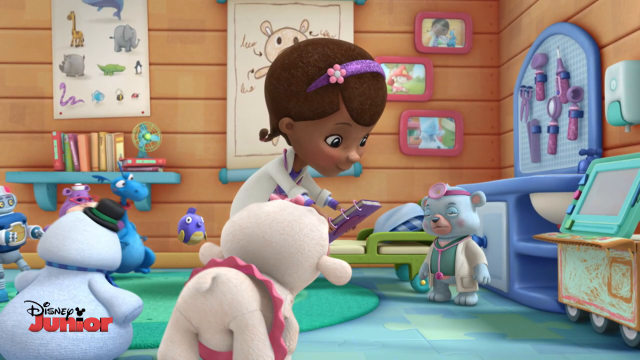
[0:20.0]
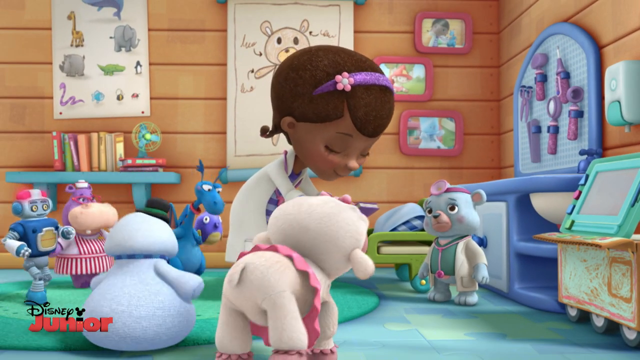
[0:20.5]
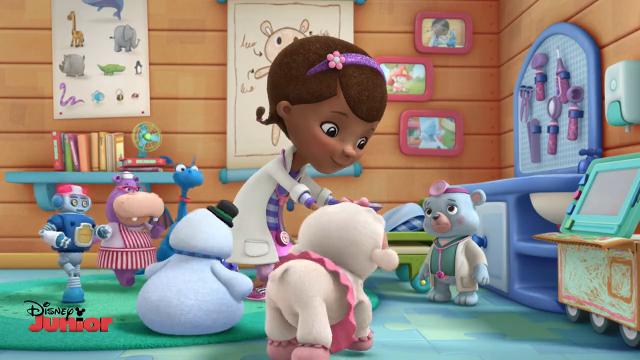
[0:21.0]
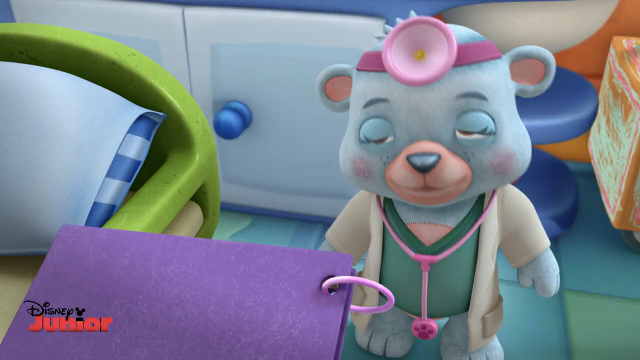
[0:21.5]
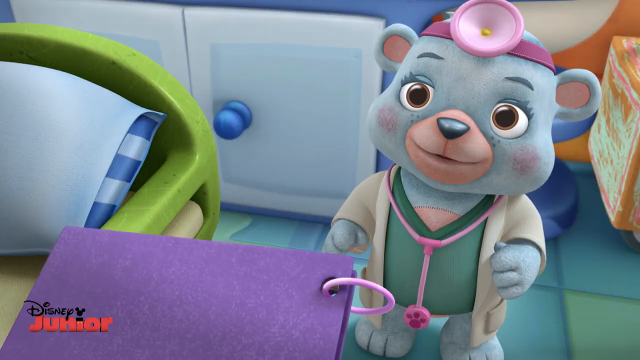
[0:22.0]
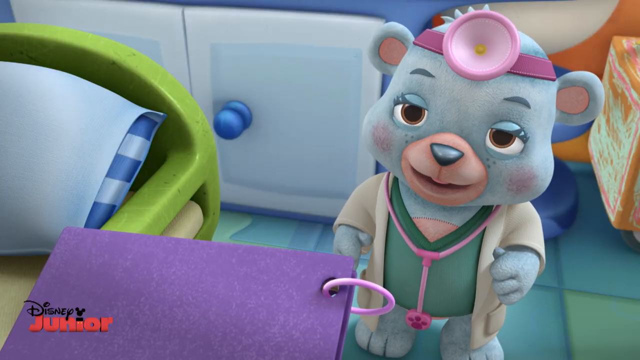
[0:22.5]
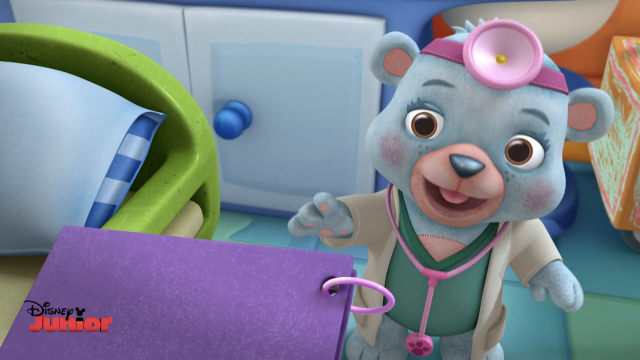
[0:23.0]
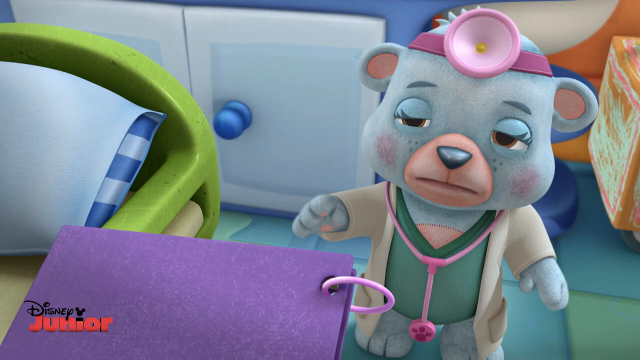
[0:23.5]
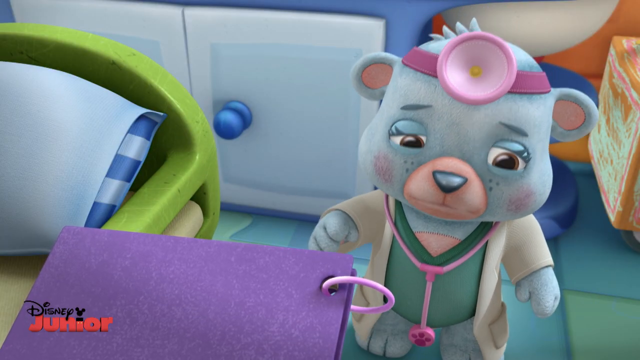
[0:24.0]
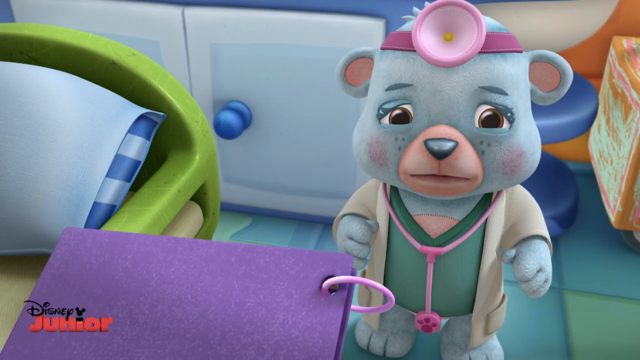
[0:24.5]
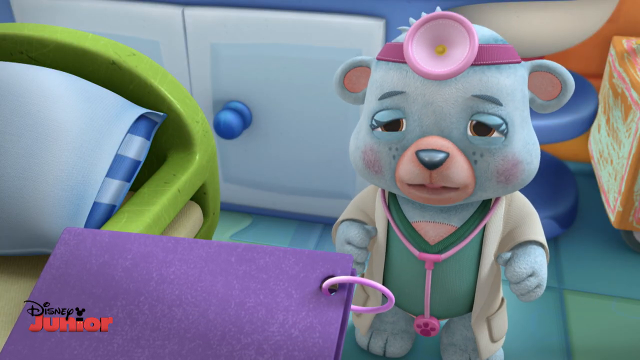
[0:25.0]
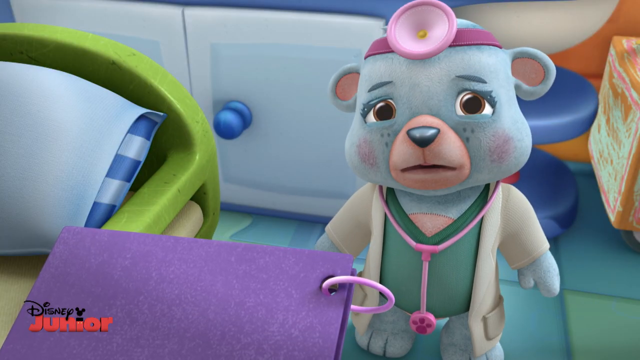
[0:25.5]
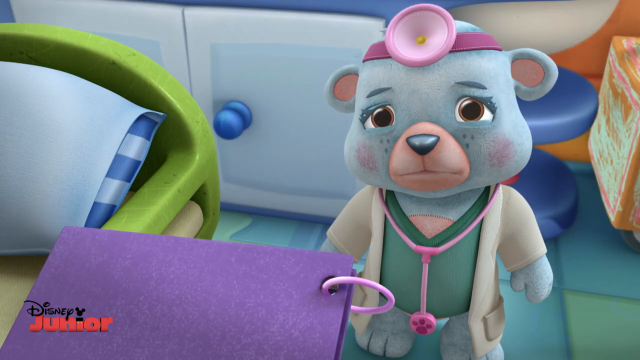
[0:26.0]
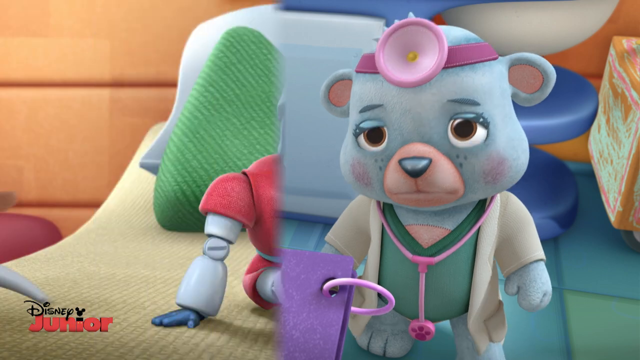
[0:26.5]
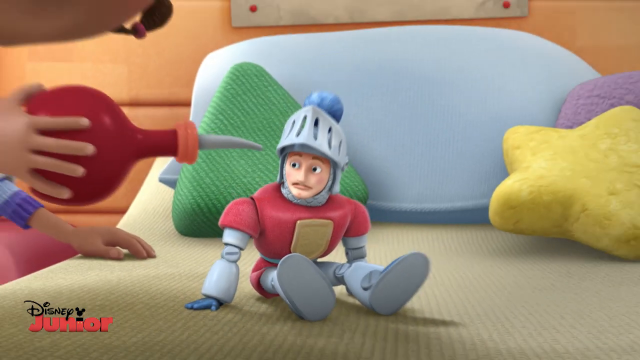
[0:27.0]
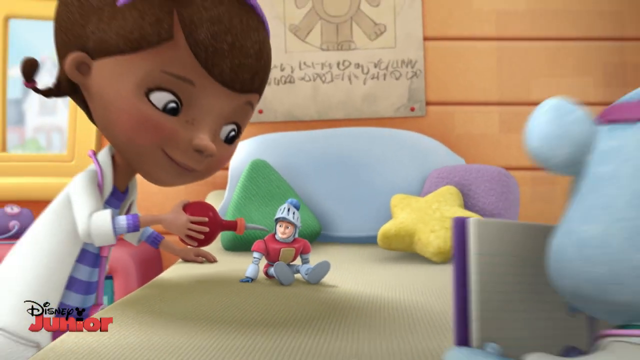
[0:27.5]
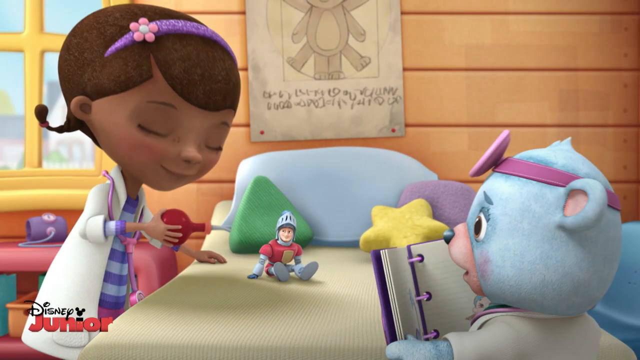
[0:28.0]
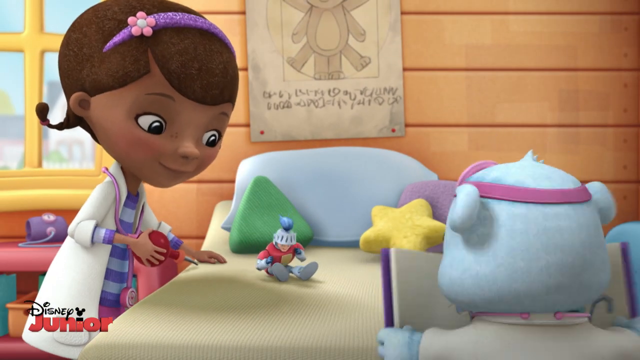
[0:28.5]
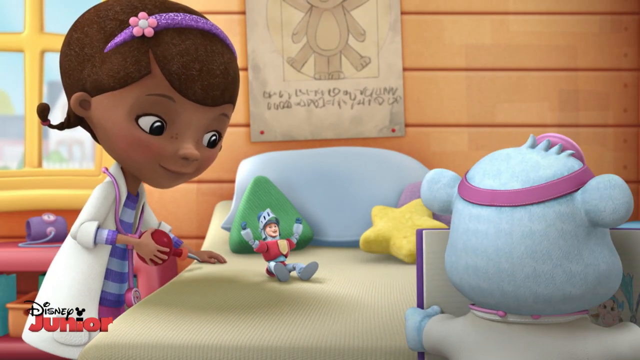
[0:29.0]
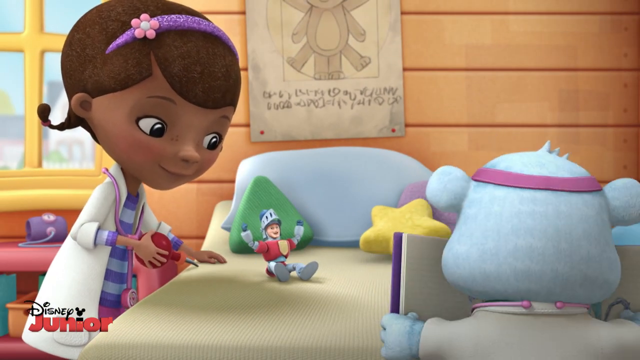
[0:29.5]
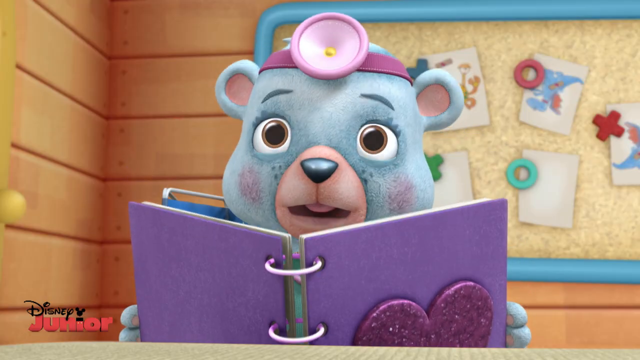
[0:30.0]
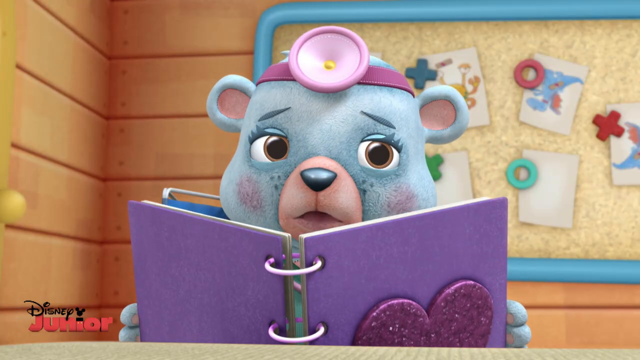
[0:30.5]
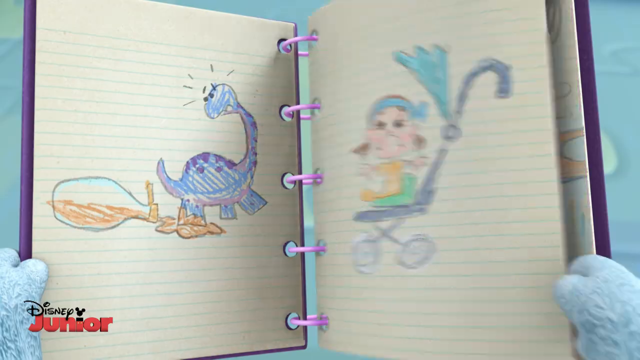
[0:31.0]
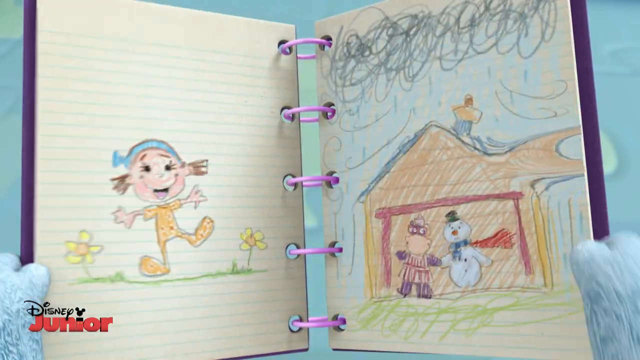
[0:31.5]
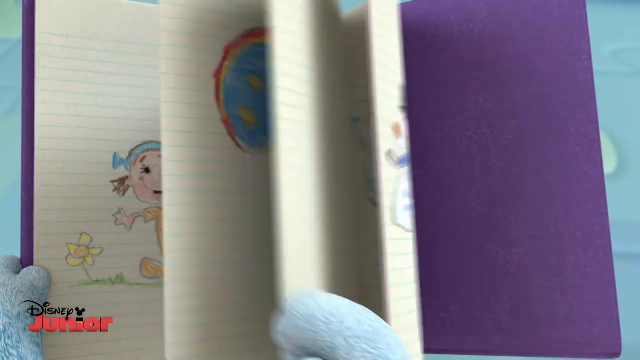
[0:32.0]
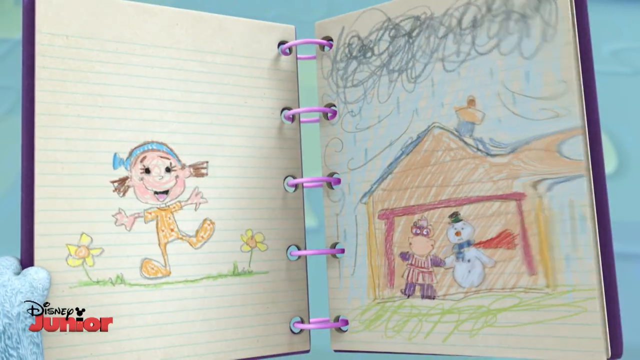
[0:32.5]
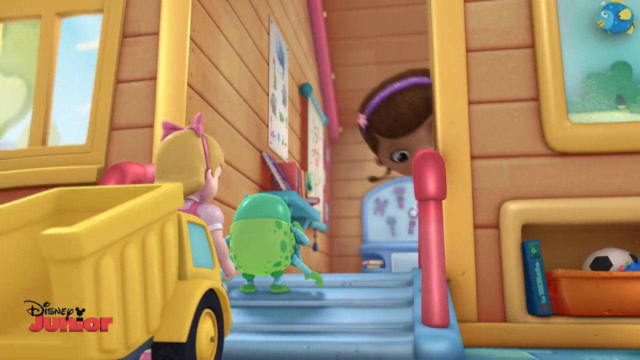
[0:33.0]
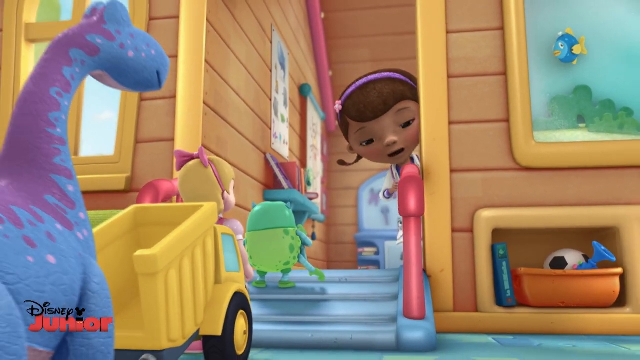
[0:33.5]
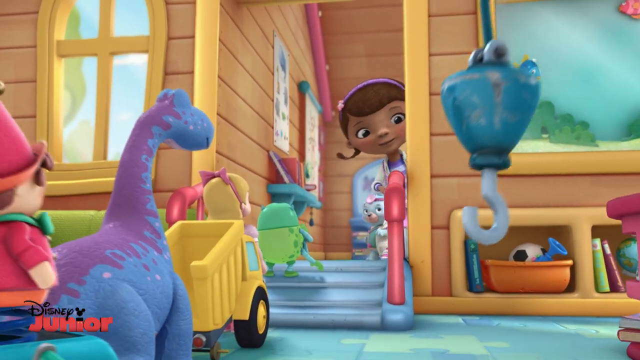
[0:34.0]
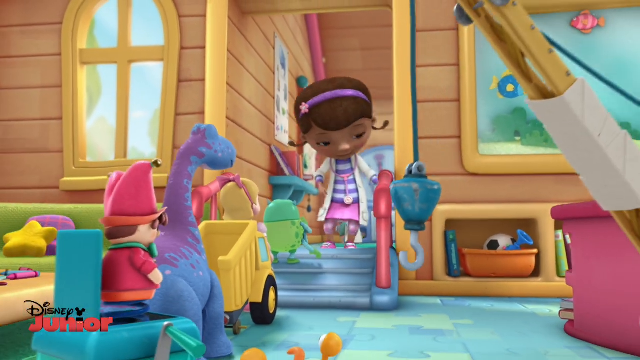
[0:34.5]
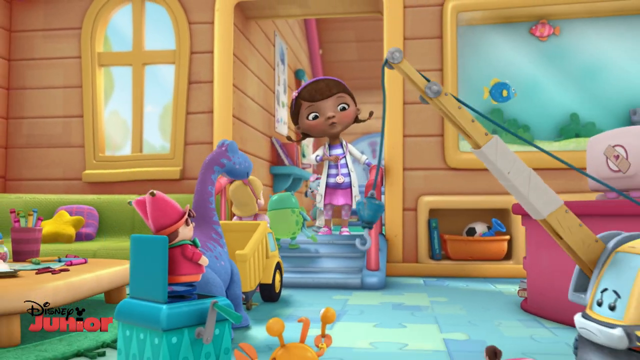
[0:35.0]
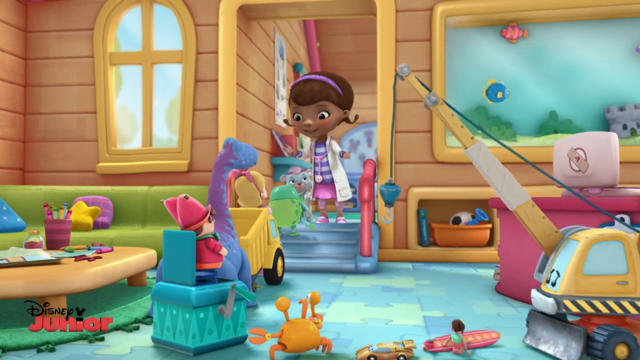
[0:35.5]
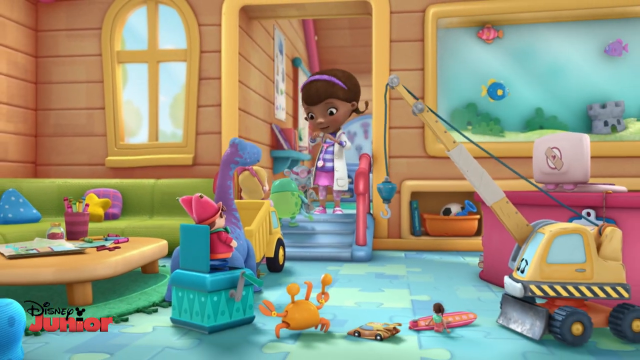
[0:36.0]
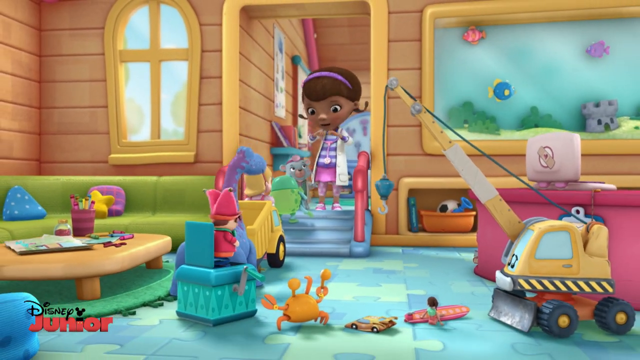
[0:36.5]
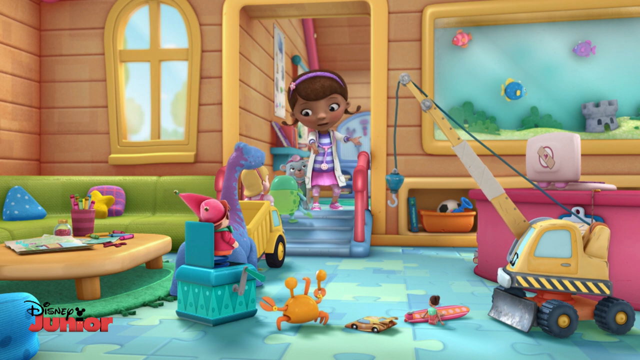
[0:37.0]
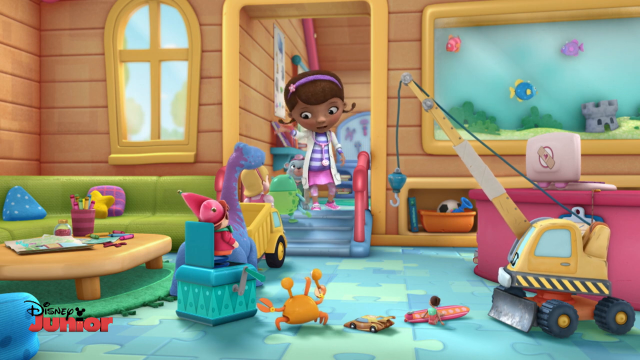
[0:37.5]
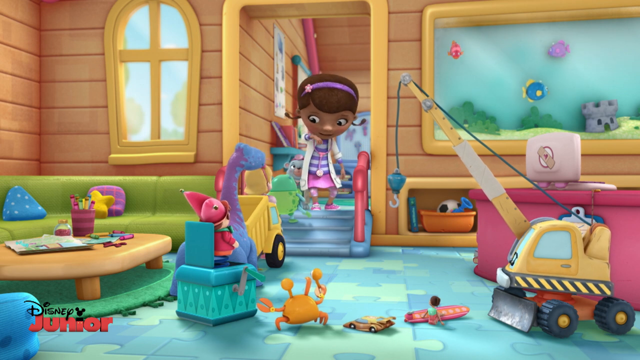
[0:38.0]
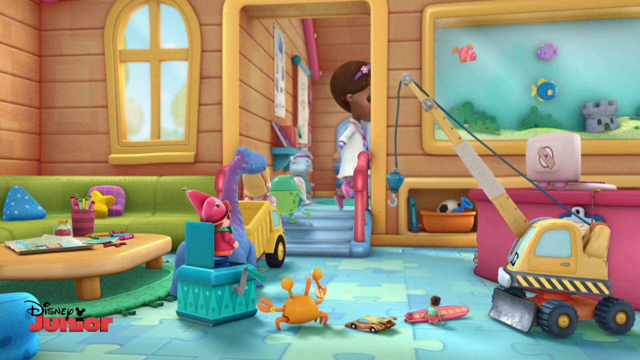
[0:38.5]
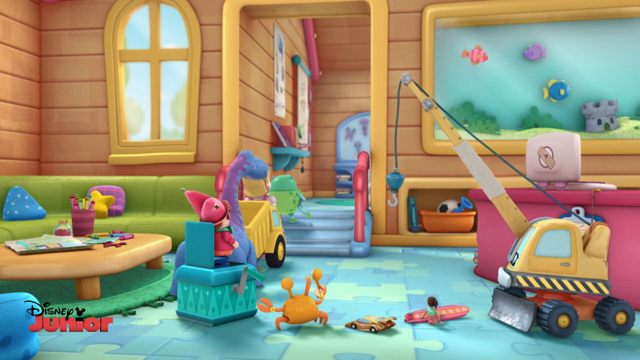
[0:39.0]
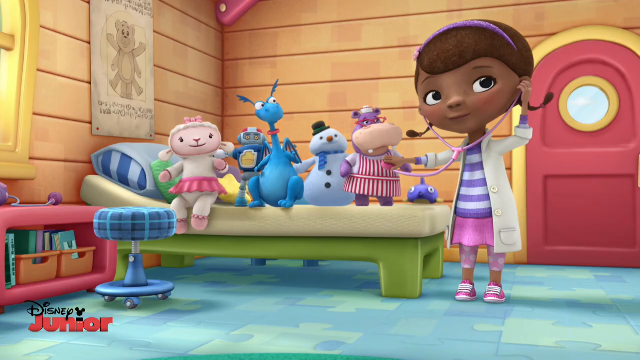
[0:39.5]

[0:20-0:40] The other characters march forward and gather around them. The mouse lifts his head as he talks, lowers his eyelids to look at the notebook, then looks up at her and straightens up. His right hand goes up, and then his face drops; his eyelids are kind of closed a little and he looks sad. He jerks his head up to look at her with a slight frown. The scene slides over to a soldier with a helmet sitting on a very large bed; he is very tiny. The girl walks over with something red in her hands, holds it up to him, and then pulls it away. The doctor enters the view holding the notebook open, and the warrior raises both arms in the air. The doctor looks up, his eyes moving as he looks at the patient. The view zooms in on the notebook as the doctor flips through the pages and stops at one showing a girl and a house on the right side. Then the scene comes to the entrance of the house, where a few creatures are on the steps, along with a little blonde girl and a yellow dump truck. The girl leans against the doorway, looking down at the steps. Her eyes pop open, and the view zooms back to show a truck with a hook. She looks down, her head droops back, and she moves her hands; her right hand goes up. She turns and walks behind the wall, one of the characters follows her, and a whole line of characters is lined up. Then all the characters are sitting or standing on the bed, and she has a stethoscope in her ears, holding it with her hands, while a hippopotamus stands on the bed next to her and the stethoscope is on her chest.